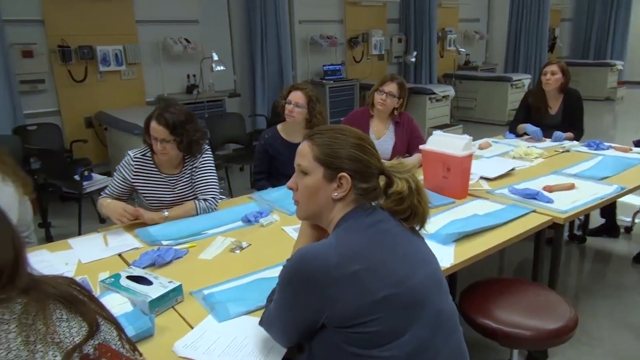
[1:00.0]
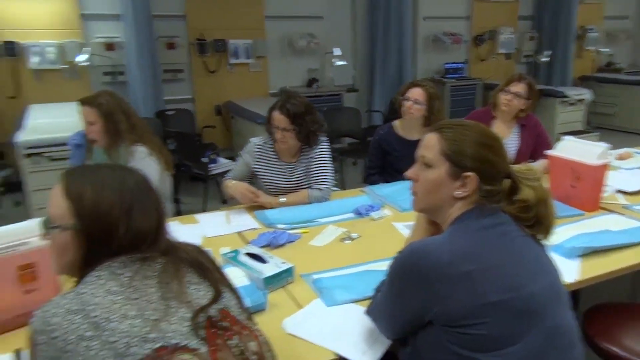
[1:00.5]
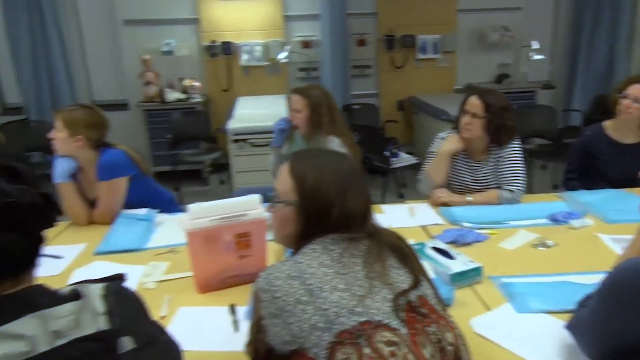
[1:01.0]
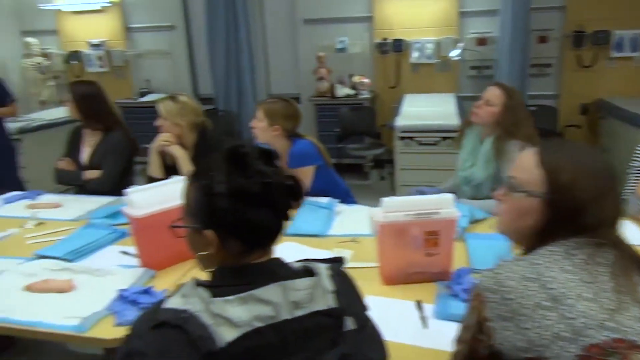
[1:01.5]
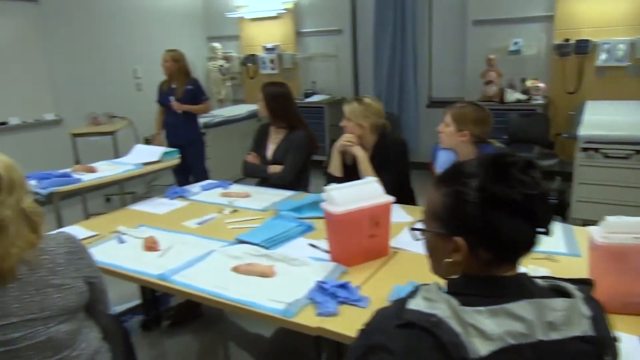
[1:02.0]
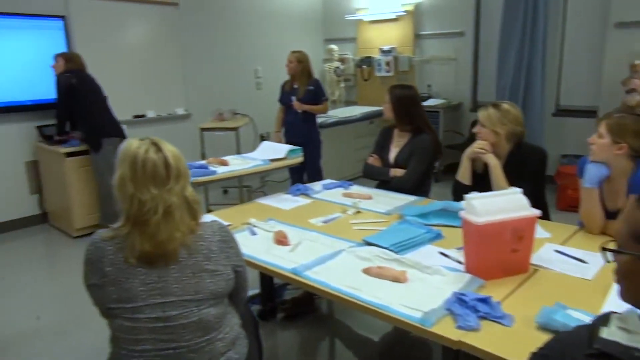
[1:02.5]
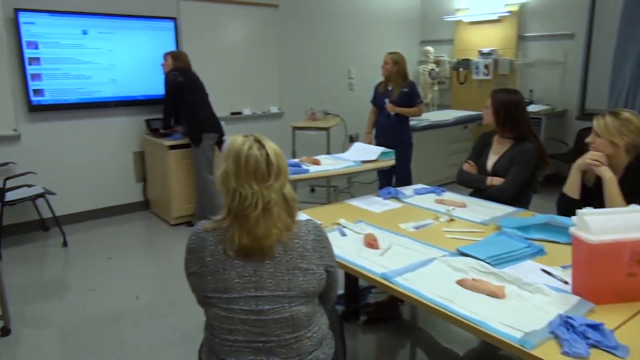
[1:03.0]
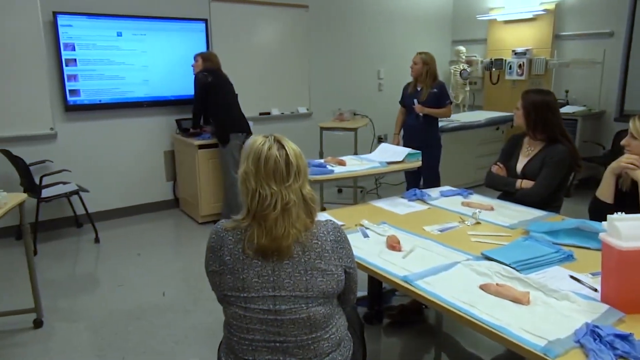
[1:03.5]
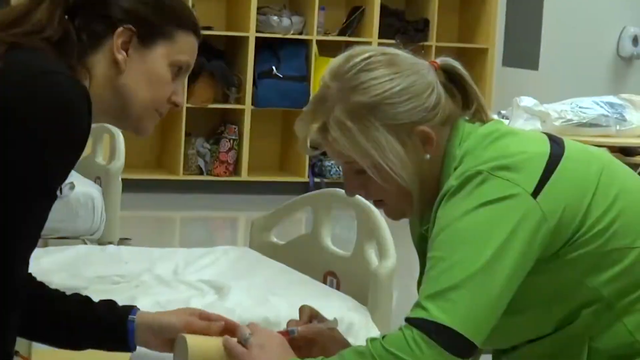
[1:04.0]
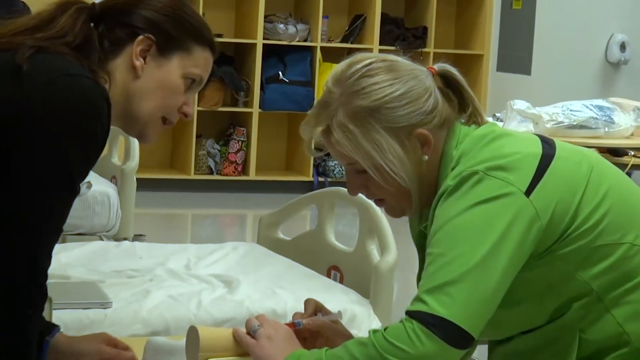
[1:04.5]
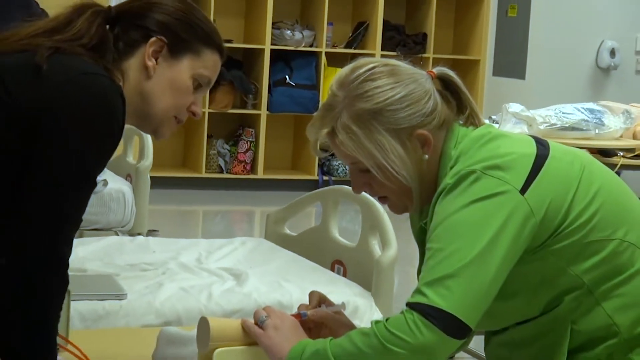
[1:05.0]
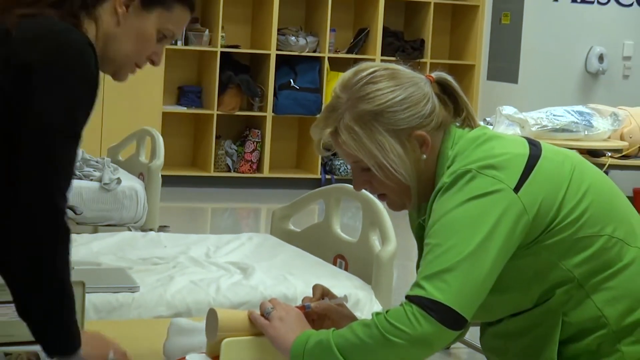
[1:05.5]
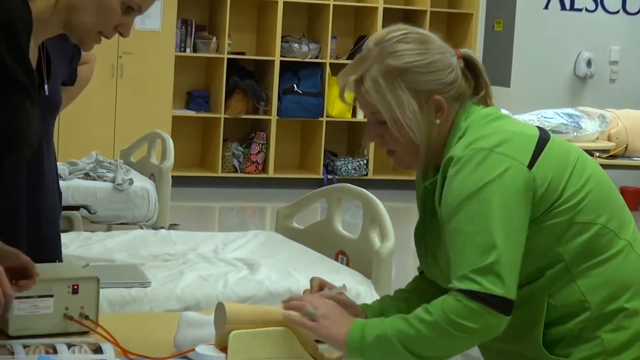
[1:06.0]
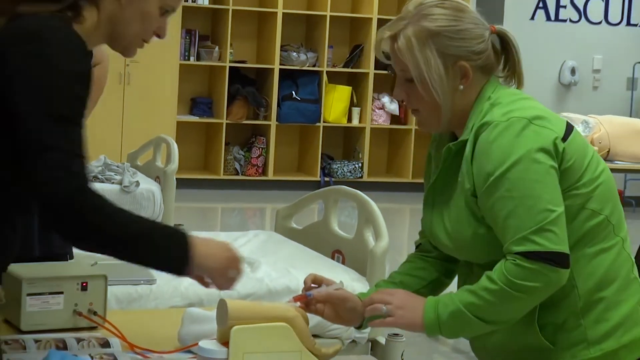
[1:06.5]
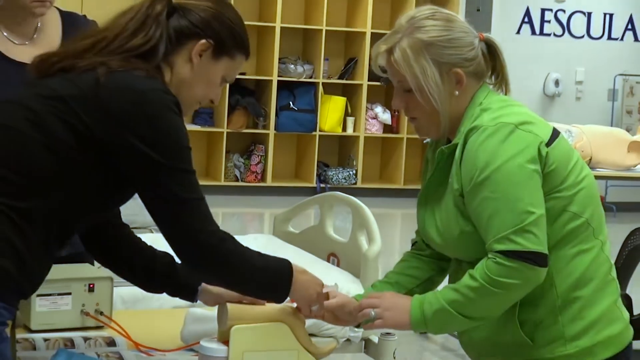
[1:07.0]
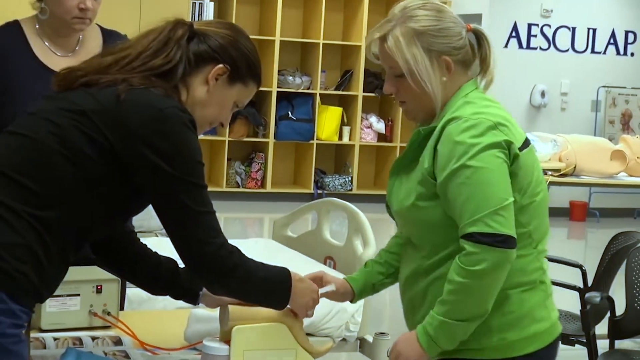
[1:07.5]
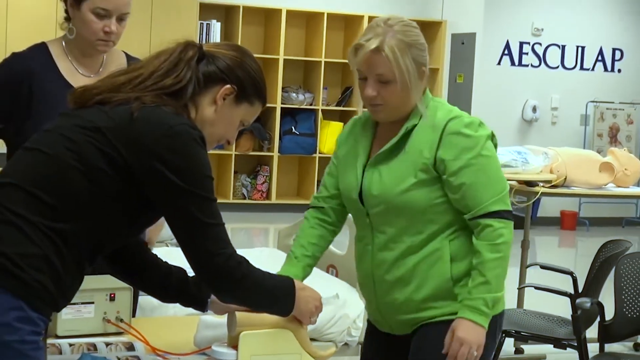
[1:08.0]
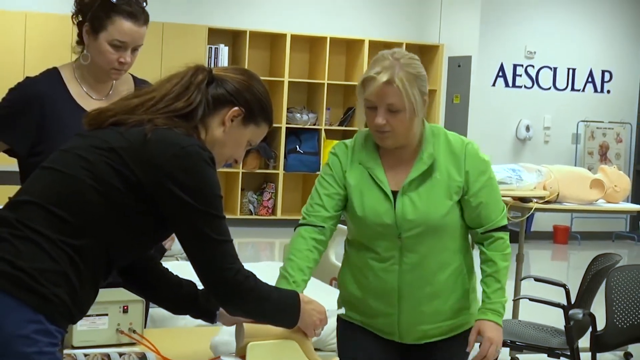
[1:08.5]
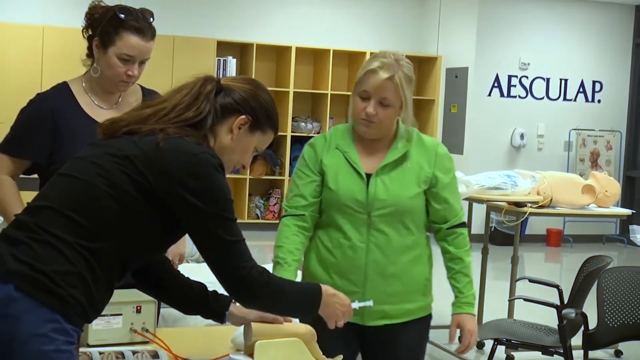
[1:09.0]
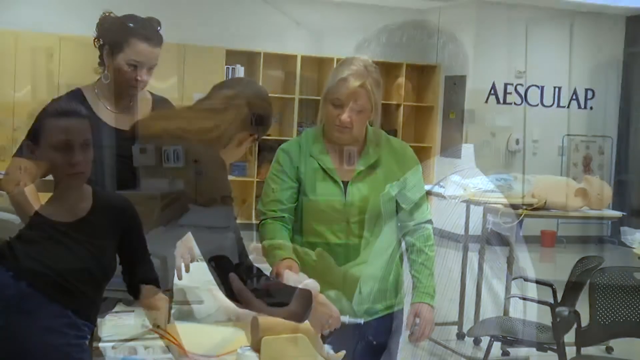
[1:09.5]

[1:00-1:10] Many people sit at the table, many different types of women. One woman has glasses and a striped shirt, another has a red sweater or cardigan, and another wears blue latex gloves; they are sort of working or learning something while listening to the discussion from a woman. A projector in the background is being watched by all of them. The next scene shows a woman in a green shirt working on something with a woman in a black shirt, and she seems to be learning something. The last scene shows a man with short hair and a striped shirt speaking to a woman in a black shirt.